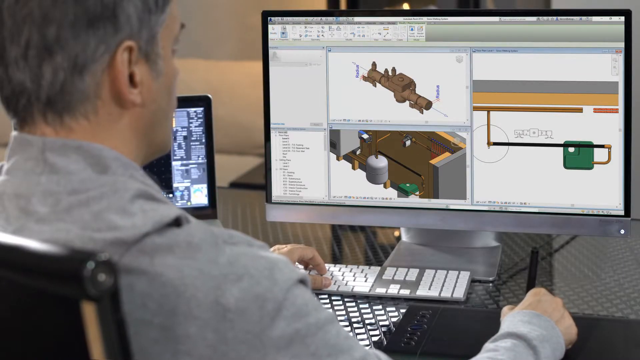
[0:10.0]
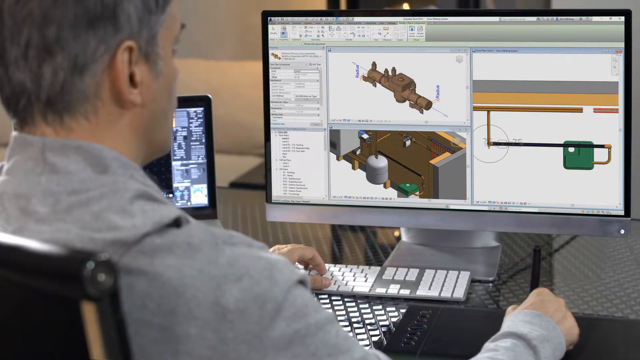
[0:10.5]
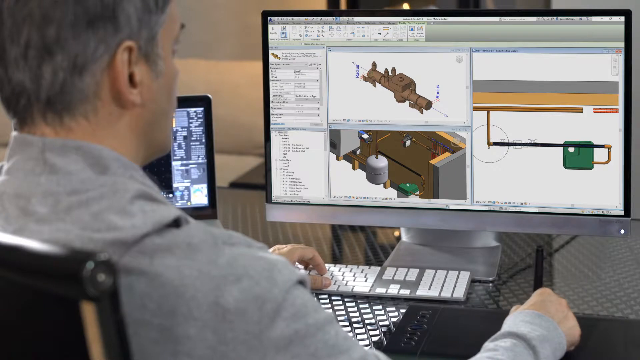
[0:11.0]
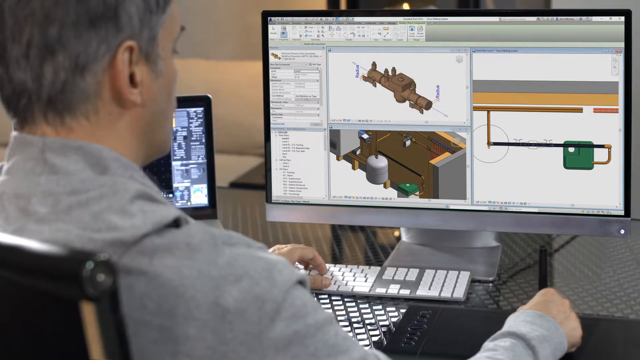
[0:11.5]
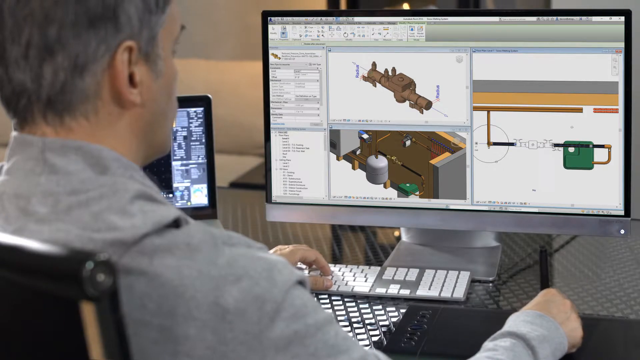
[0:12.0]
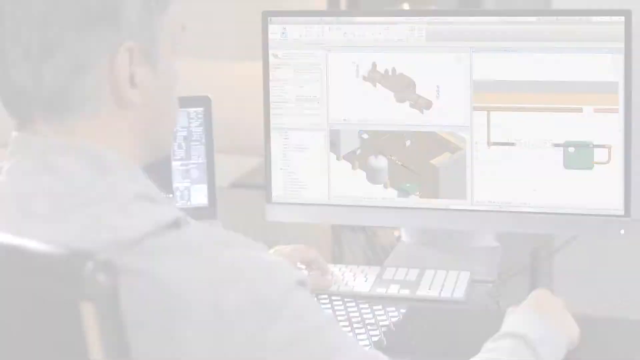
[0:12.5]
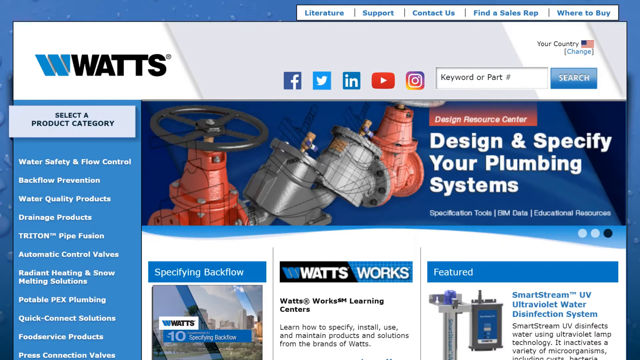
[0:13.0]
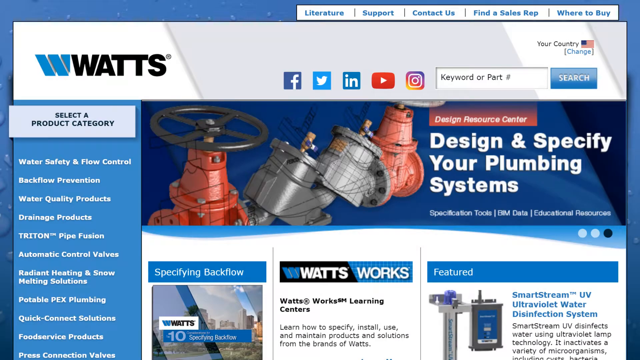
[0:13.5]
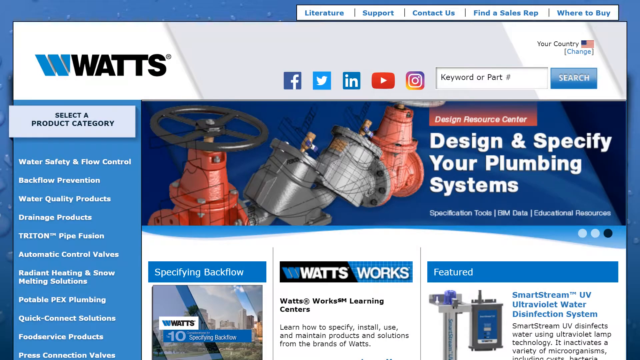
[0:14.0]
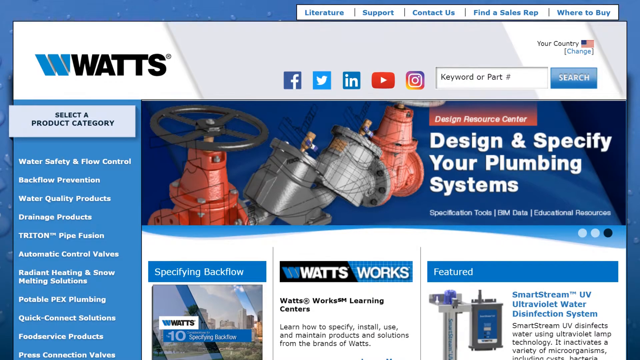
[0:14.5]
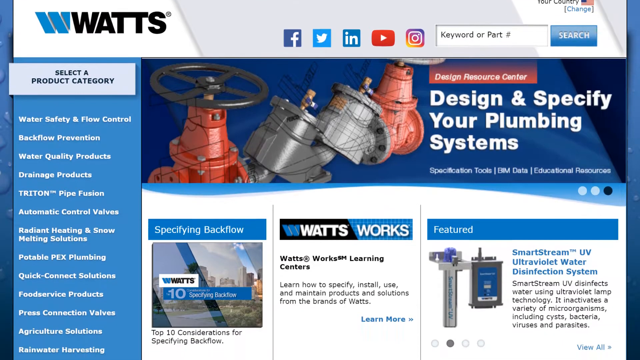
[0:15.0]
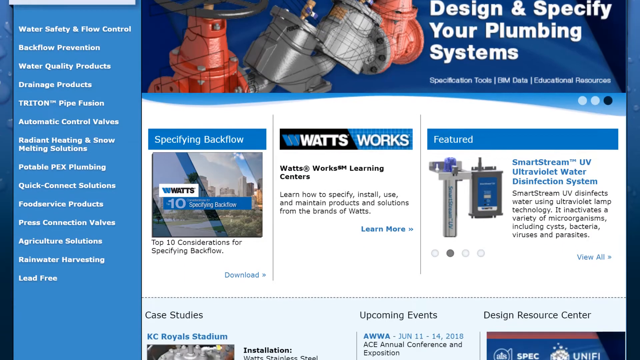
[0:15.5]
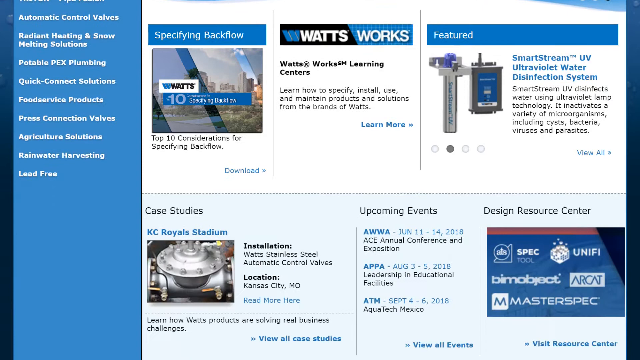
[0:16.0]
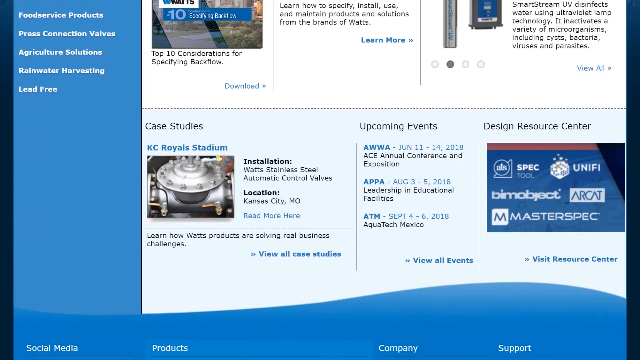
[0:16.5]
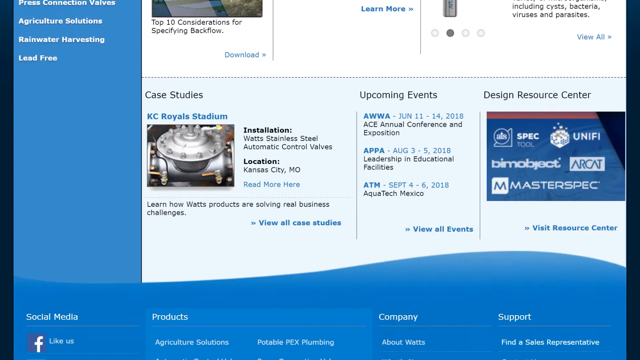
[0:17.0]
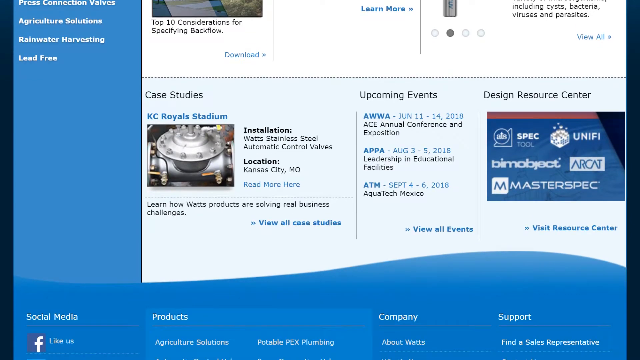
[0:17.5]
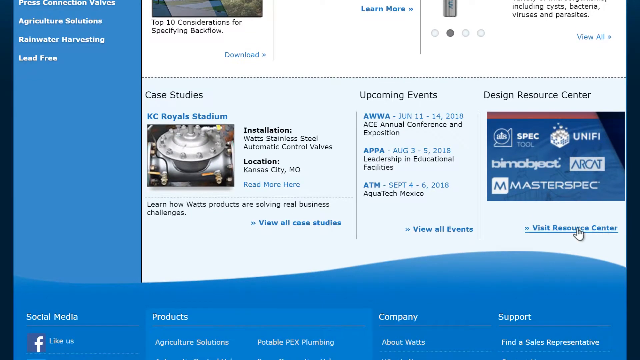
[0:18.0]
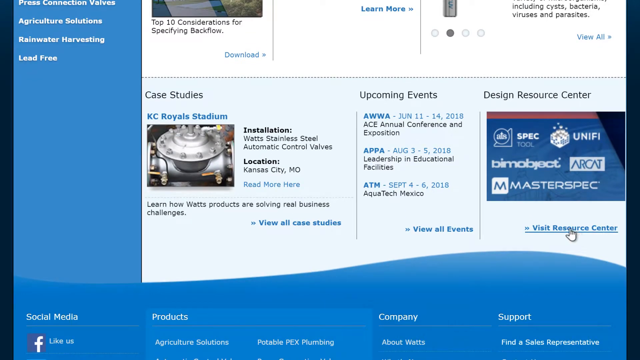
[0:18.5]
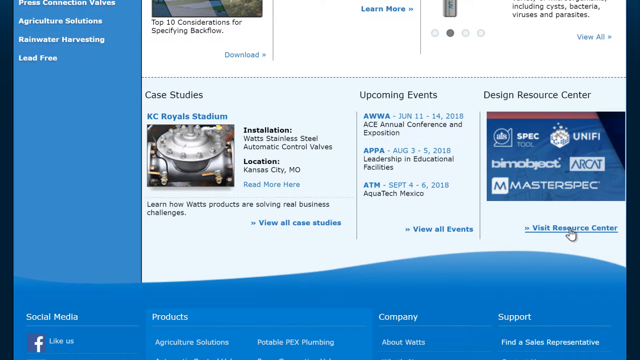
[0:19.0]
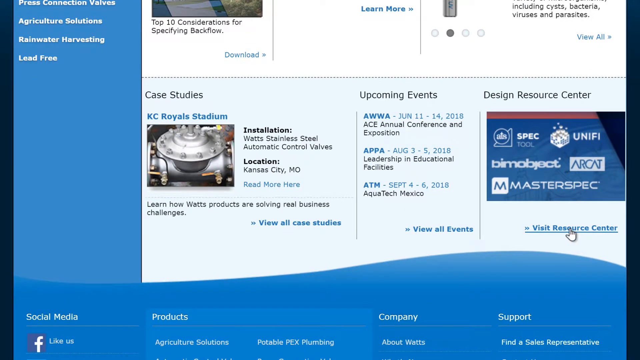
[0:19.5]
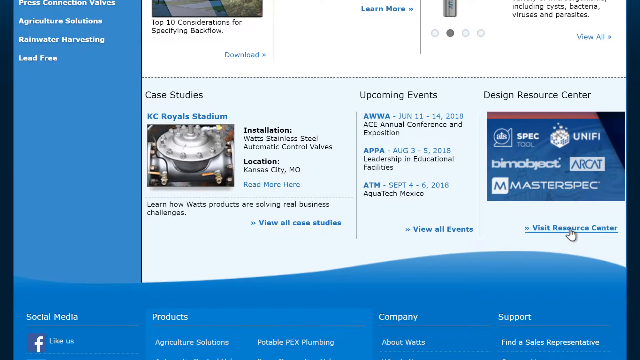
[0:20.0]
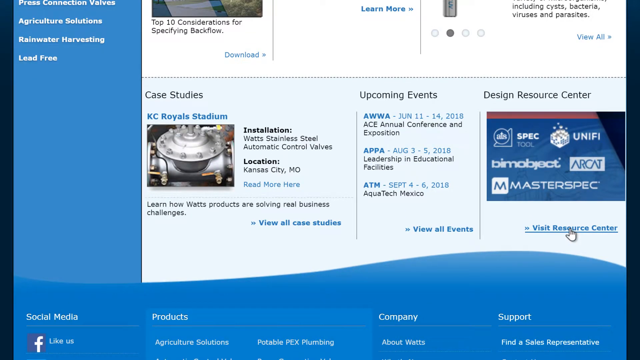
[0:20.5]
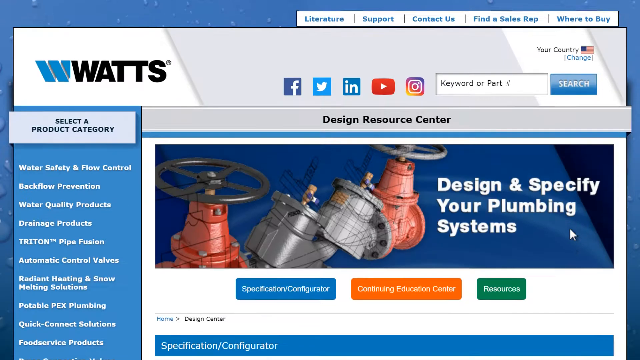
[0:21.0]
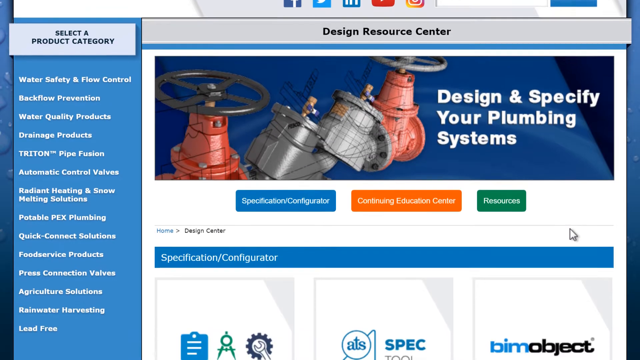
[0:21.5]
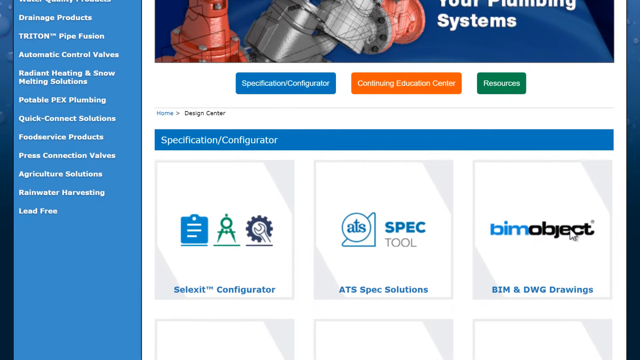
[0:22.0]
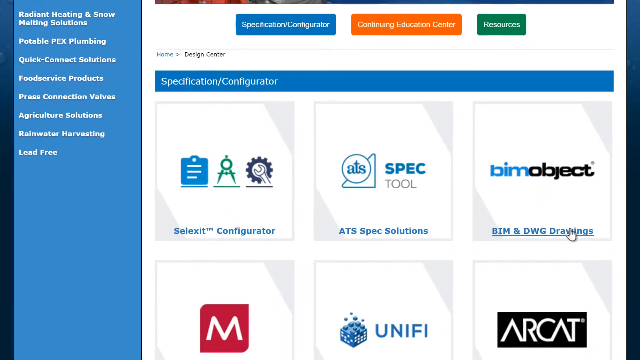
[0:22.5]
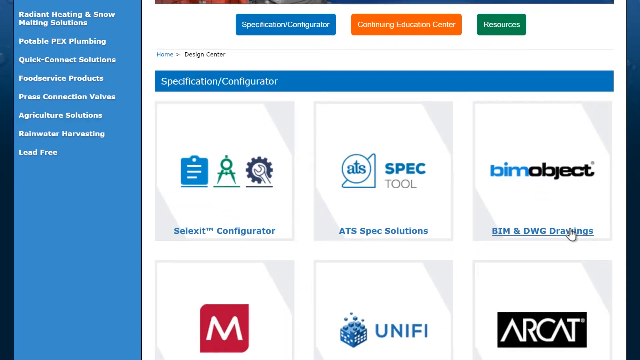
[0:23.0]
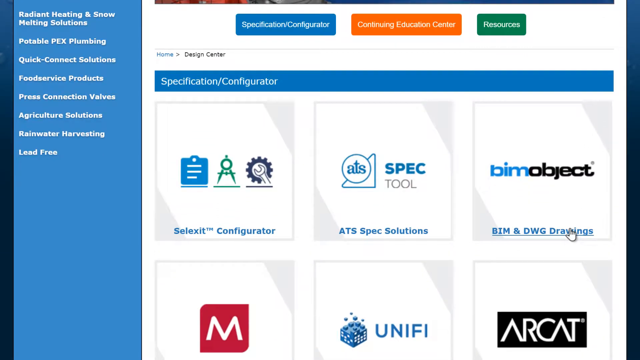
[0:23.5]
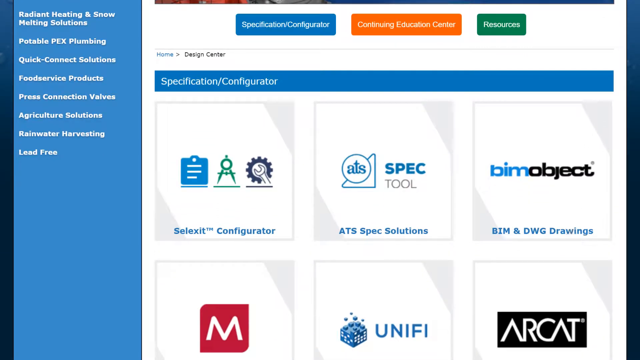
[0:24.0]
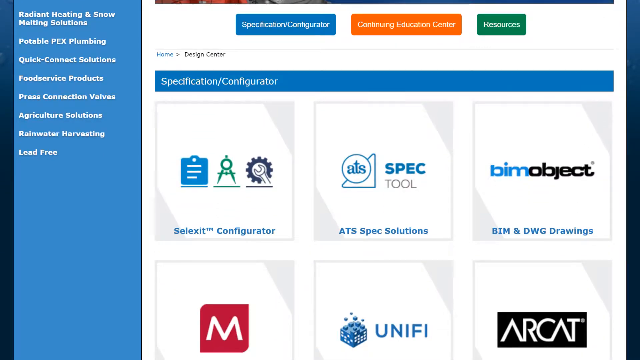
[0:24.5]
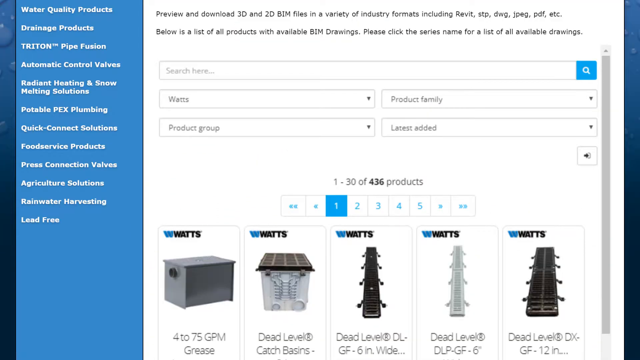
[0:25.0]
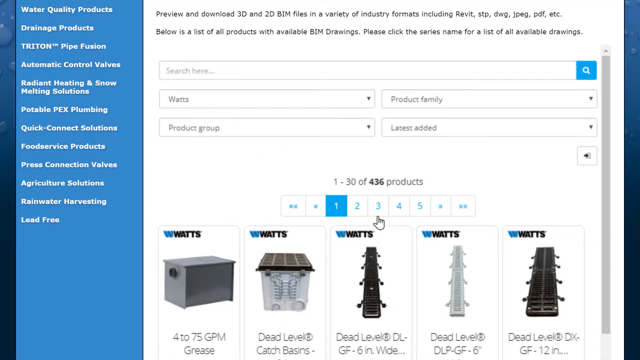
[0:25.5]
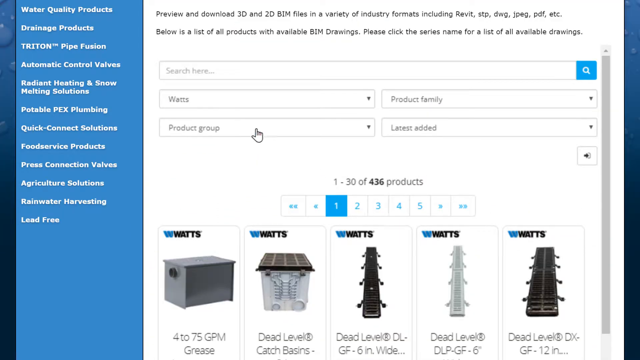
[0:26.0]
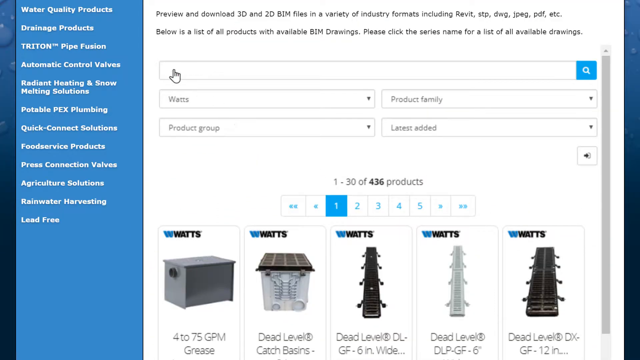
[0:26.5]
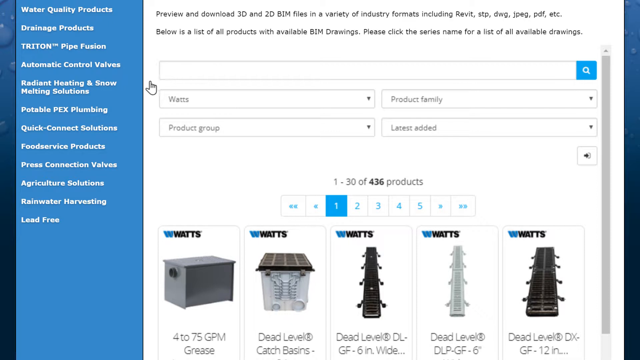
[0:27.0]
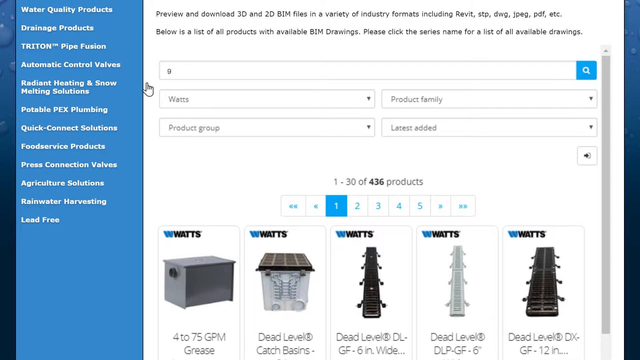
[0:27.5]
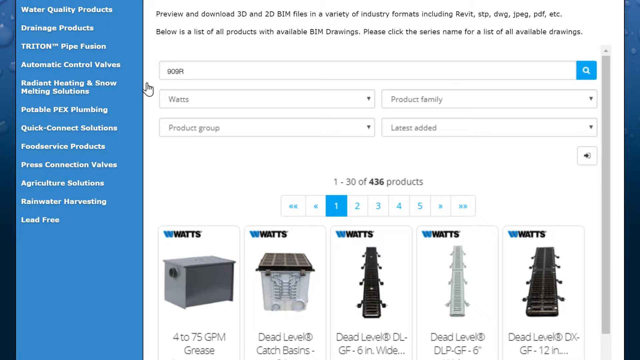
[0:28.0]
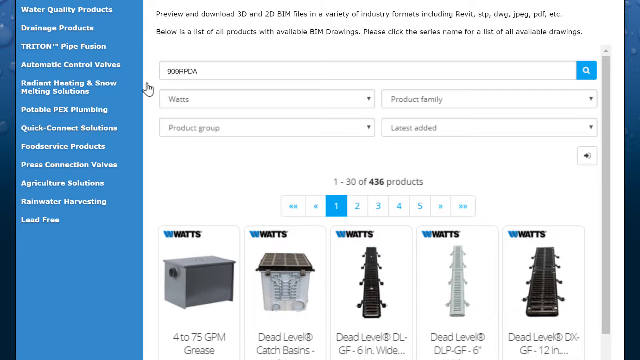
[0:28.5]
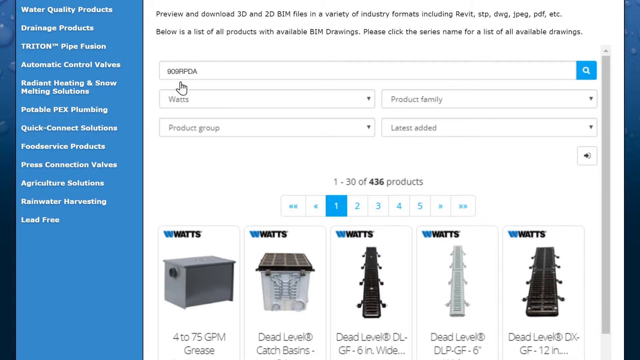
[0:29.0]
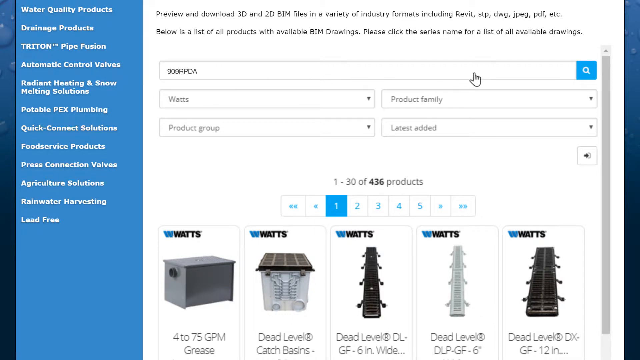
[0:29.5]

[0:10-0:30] The guy is still searching the website, and then a website called WATS opens. It lists categories: water safety and flow control, flow prevention, water quality products, drainage products, Triton pipe fusion, automatic control valves, and radiant heating and snow melting solutions. At the top are links to Facebook, Twitter, YouTube and Instagram, along with a search option, the logo, and the text "design and specify your plumbing system". The plumbing website's features are shown as he keeps scrolling through the specifications, upcoming events, installation information, and events with their dates.